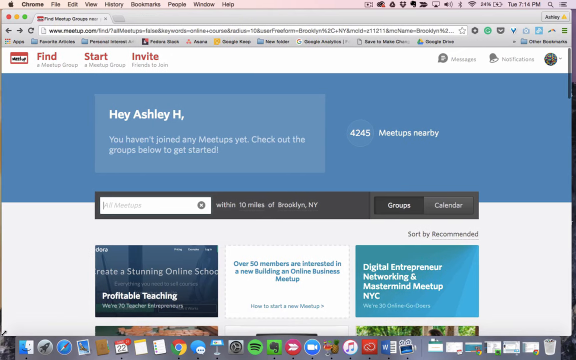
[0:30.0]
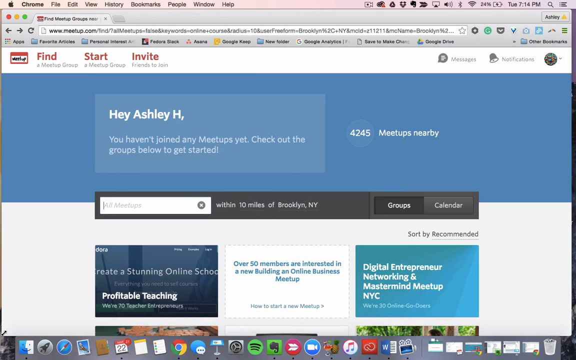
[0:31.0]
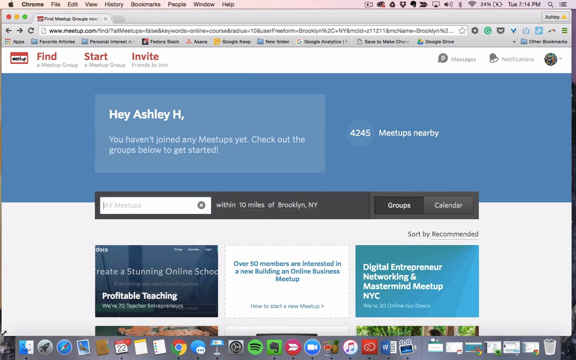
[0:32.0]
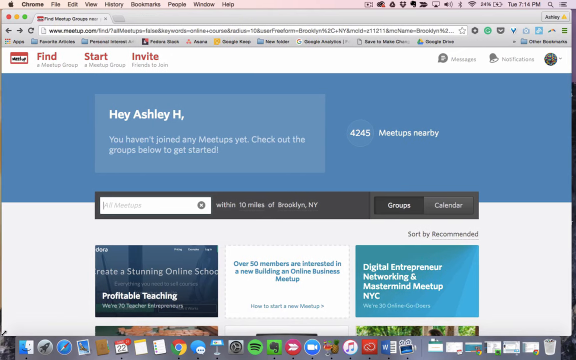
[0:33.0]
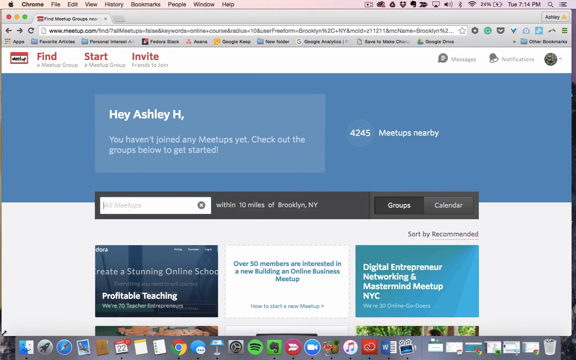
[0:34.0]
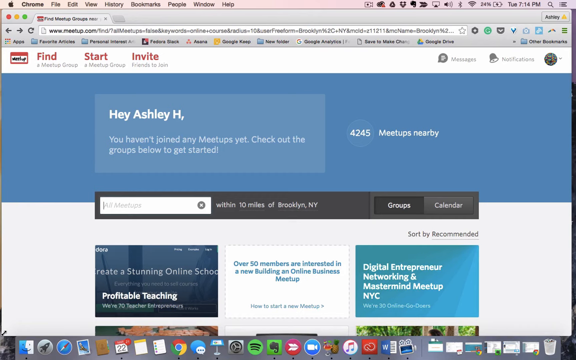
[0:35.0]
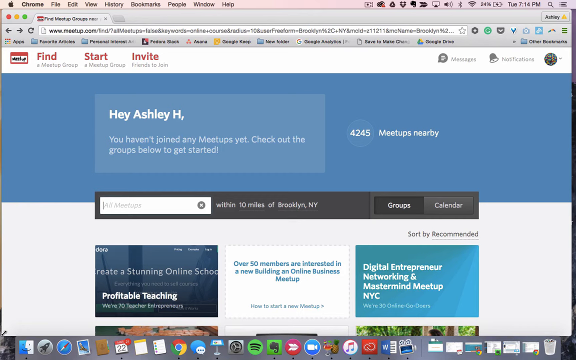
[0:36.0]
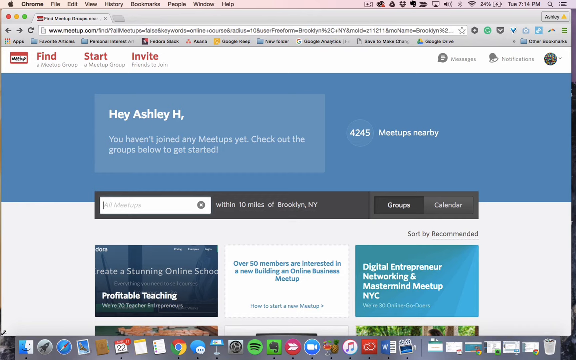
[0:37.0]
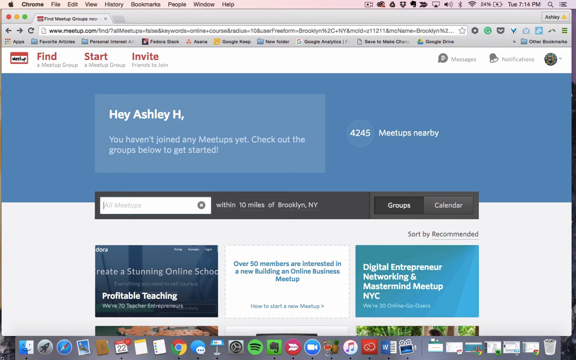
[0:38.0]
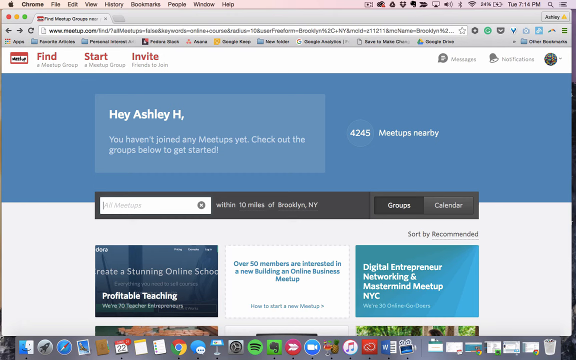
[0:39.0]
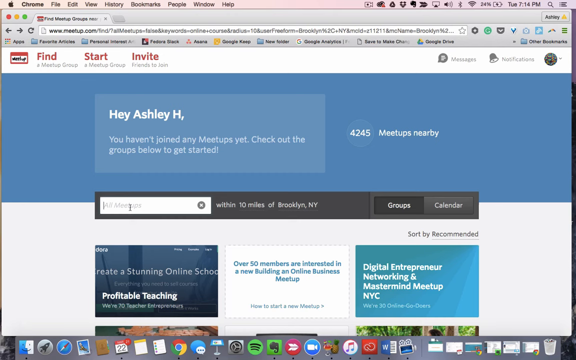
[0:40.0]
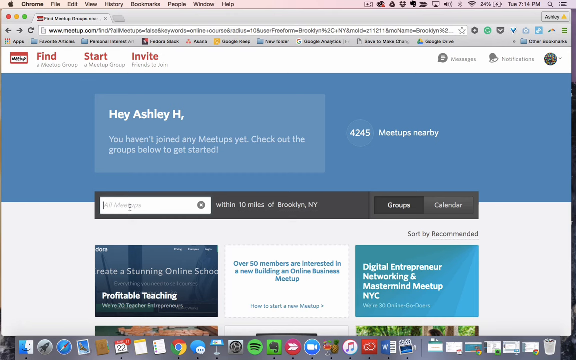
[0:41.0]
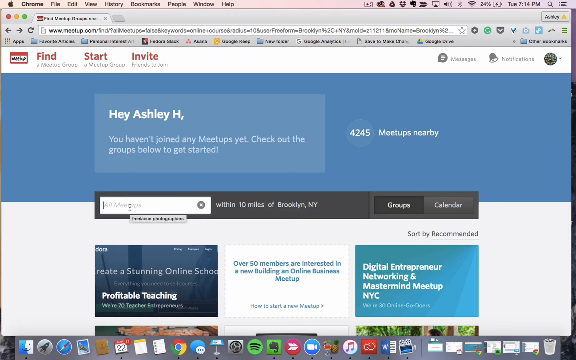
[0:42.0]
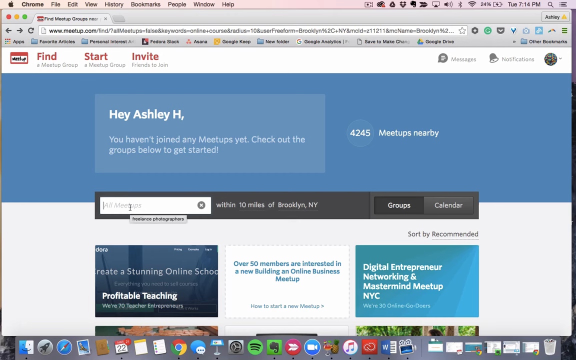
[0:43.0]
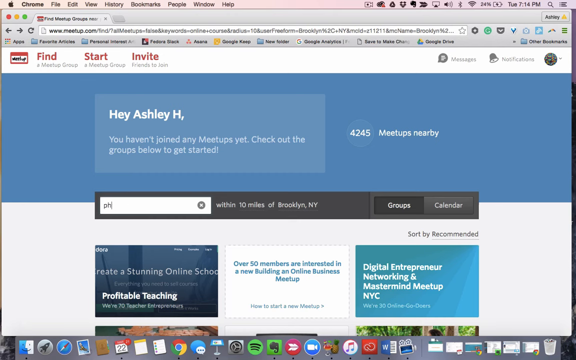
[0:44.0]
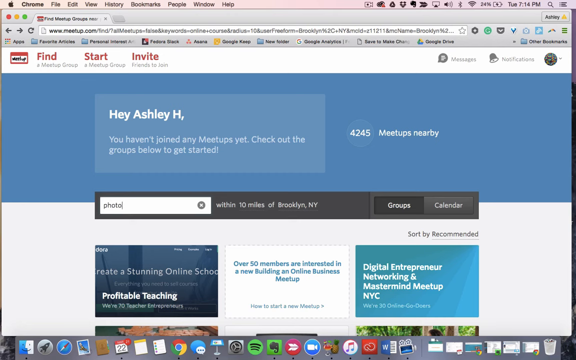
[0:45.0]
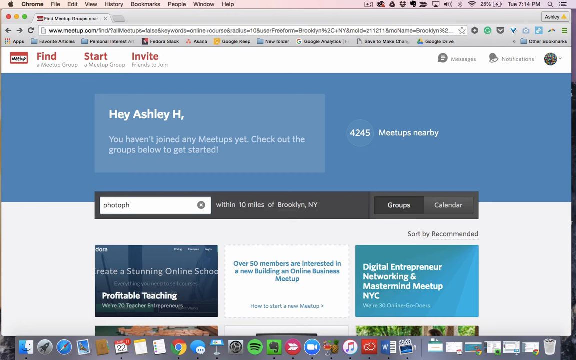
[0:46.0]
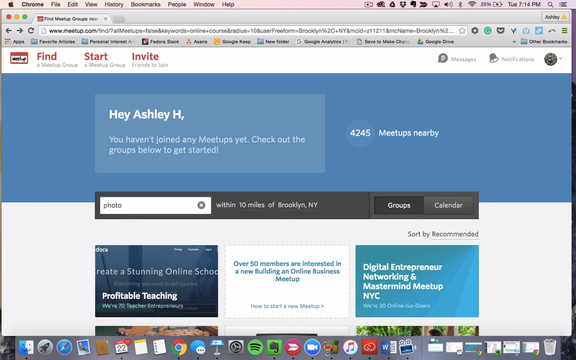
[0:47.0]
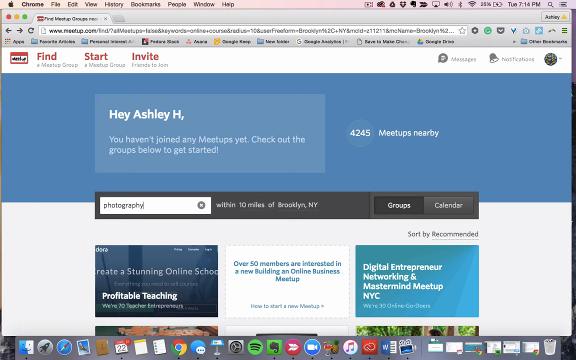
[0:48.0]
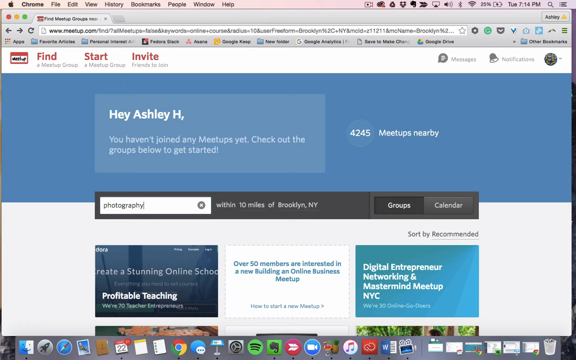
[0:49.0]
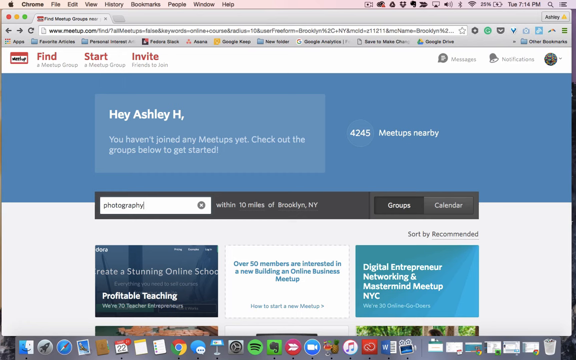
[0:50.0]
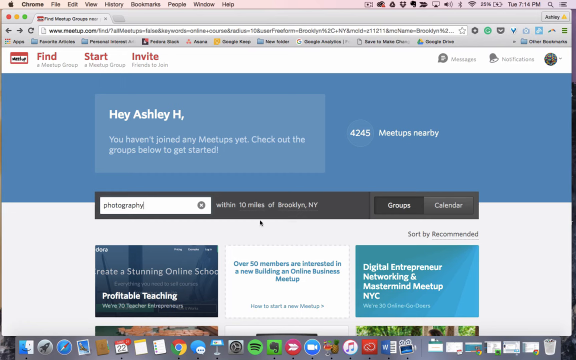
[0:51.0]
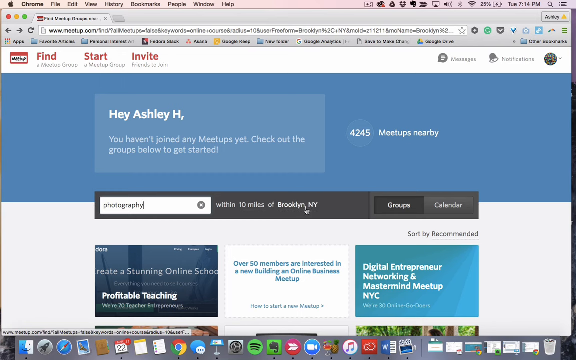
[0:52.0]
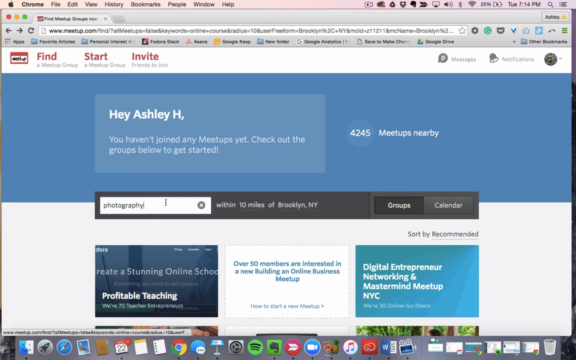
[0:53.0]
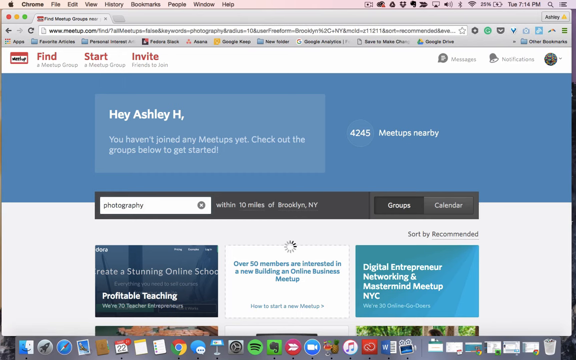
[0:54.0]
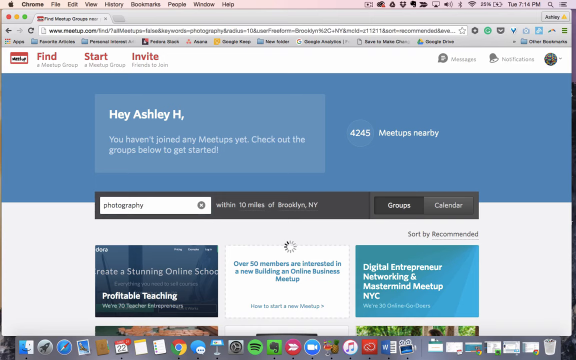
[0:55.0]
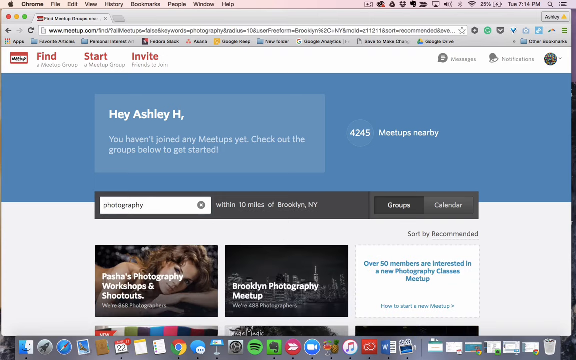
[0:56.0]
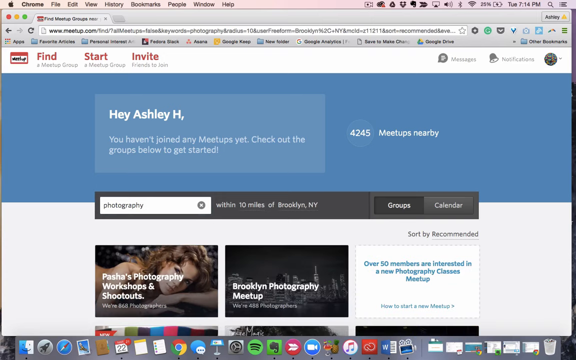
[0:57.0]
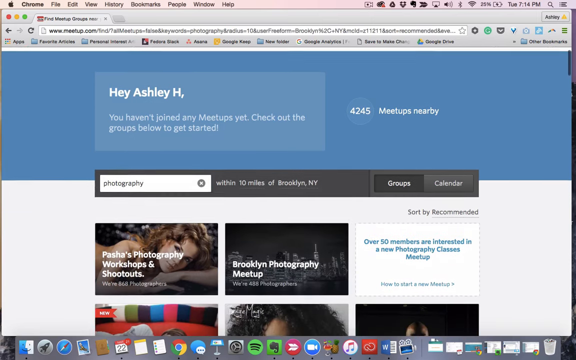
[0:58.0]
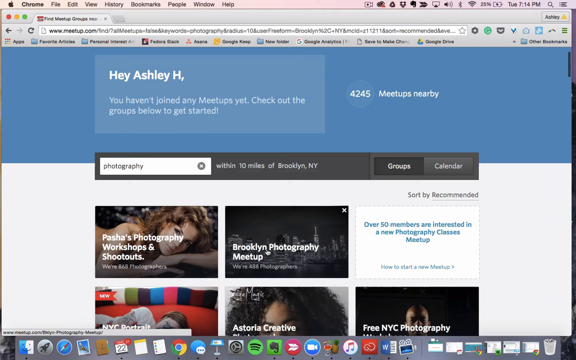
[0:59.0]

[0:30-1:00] On the page reading "hey" and "you haven't joined any", options to choose from are listed below. The page is shown within a laptop, with the different pages the user had entered visible, and further search options appear below. The user searches for meetups, first typing "photography". A loading sign appears, and when loading finishes the suggested meetup options change: there is what appears to be a photography workshop and shootout option, and another option for Brooklyn photography. On the right-hand side, blue text reads "Over 50 members are interested in a new photography classes meetup."